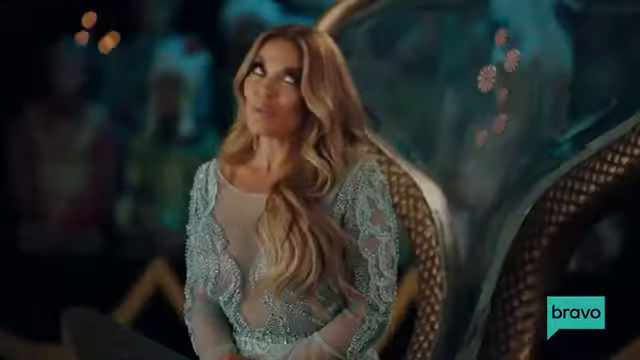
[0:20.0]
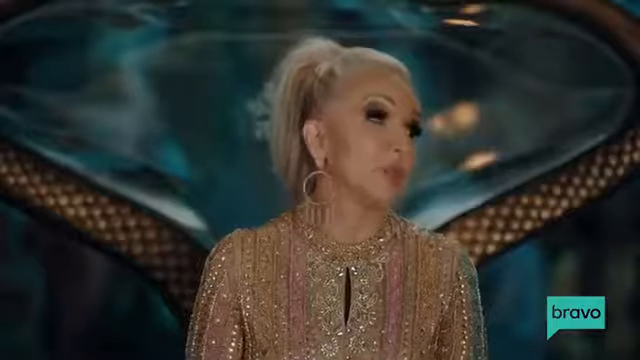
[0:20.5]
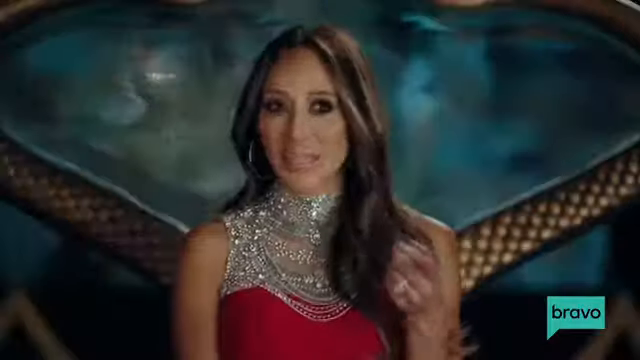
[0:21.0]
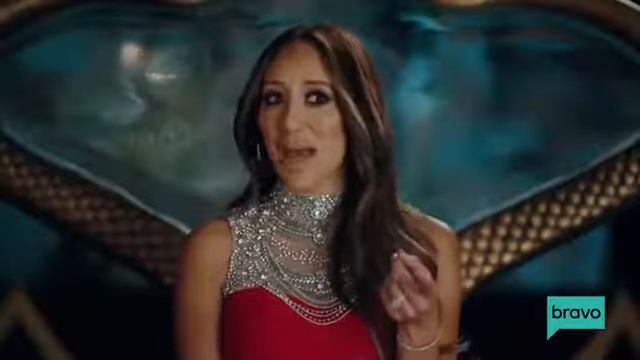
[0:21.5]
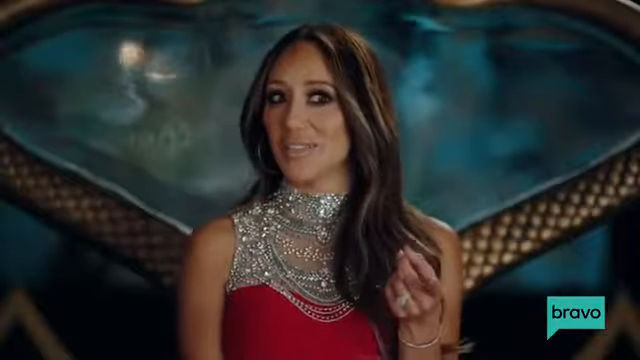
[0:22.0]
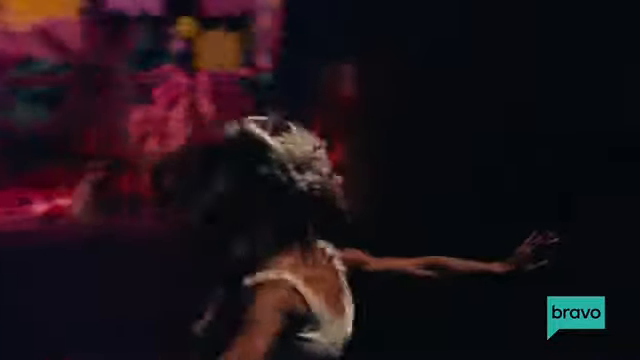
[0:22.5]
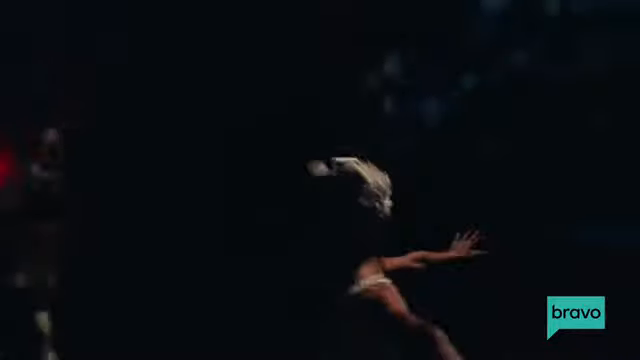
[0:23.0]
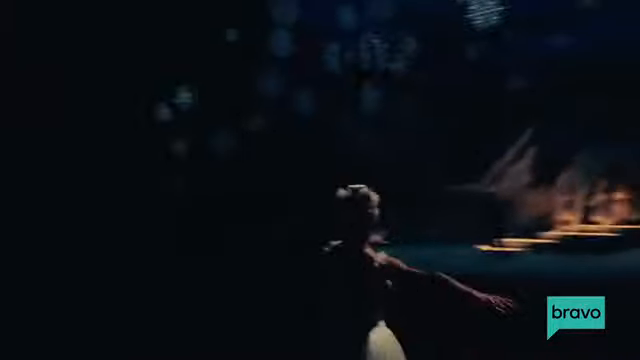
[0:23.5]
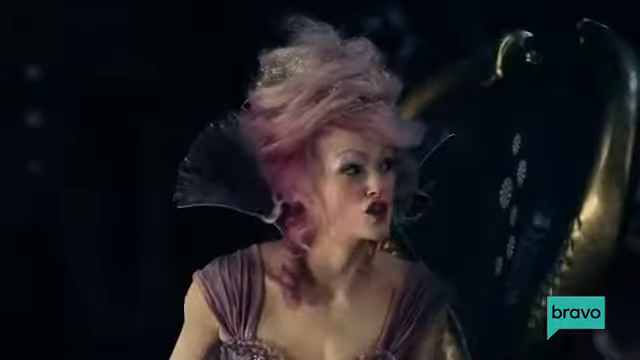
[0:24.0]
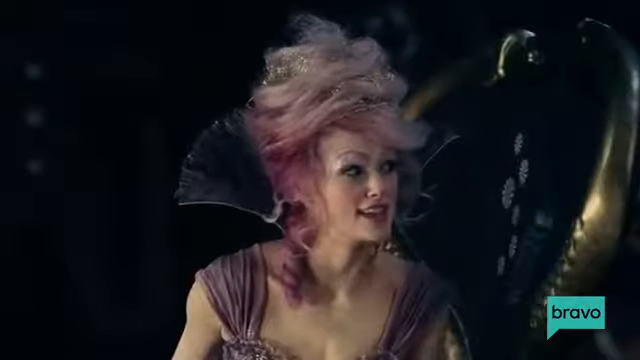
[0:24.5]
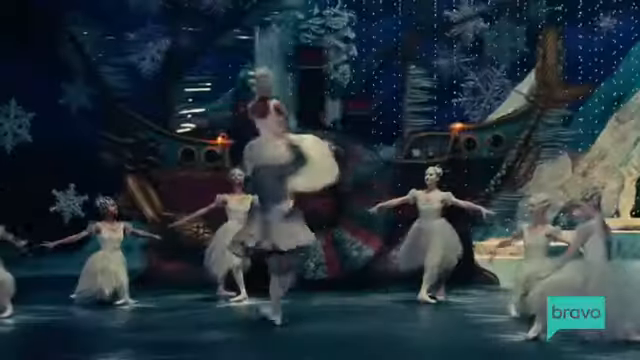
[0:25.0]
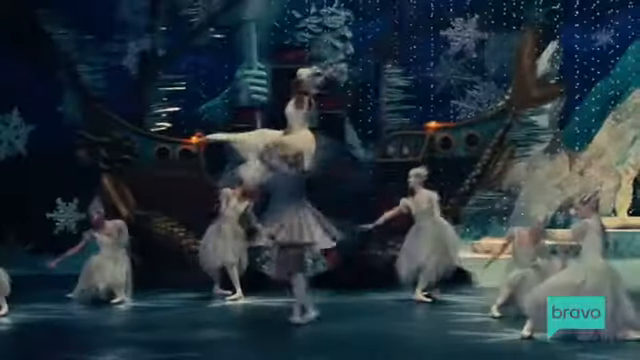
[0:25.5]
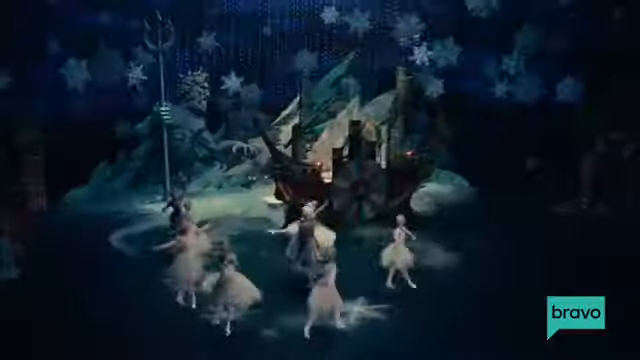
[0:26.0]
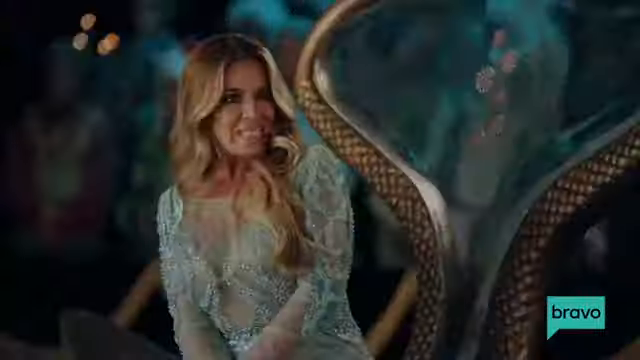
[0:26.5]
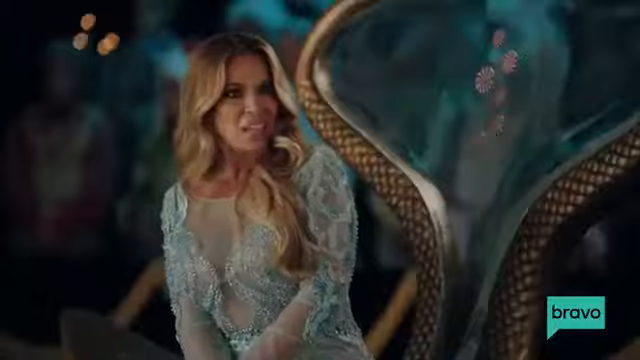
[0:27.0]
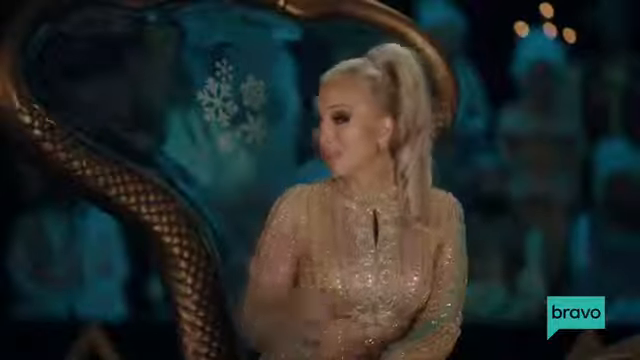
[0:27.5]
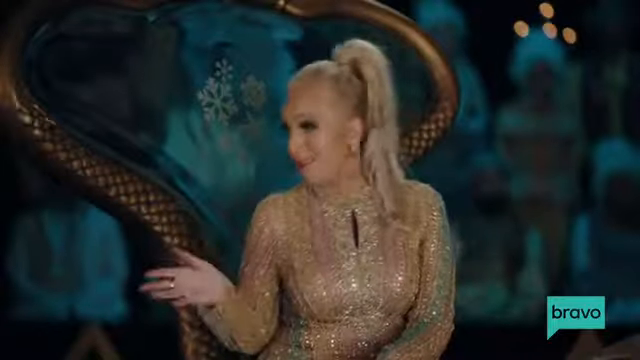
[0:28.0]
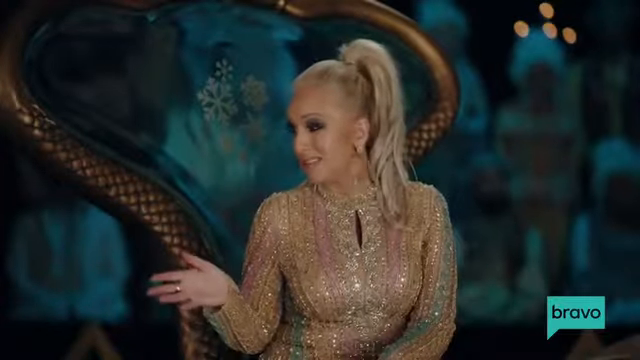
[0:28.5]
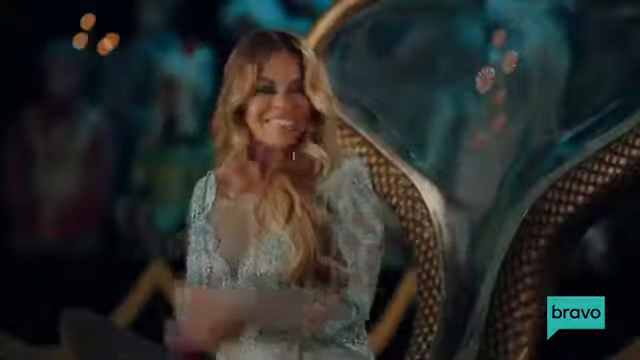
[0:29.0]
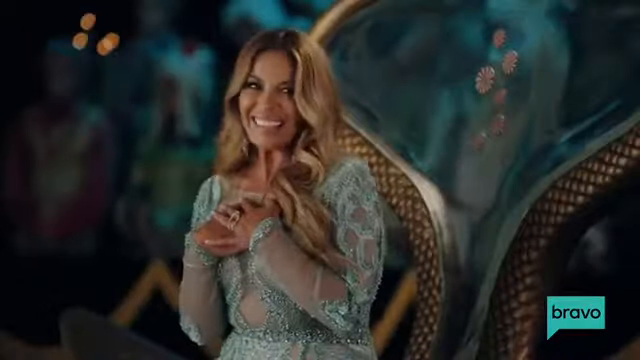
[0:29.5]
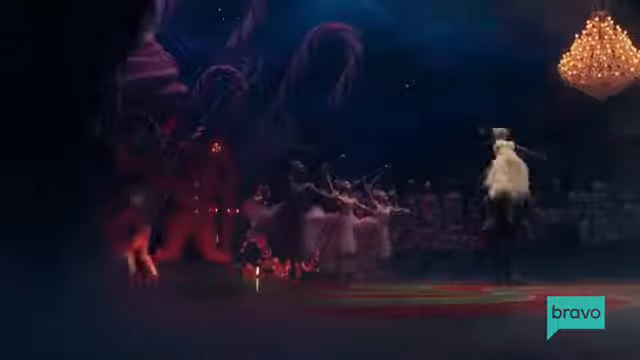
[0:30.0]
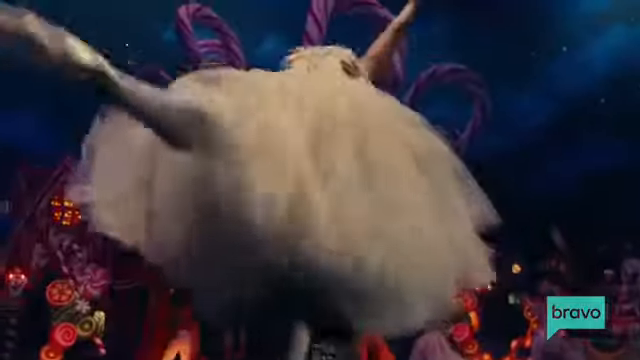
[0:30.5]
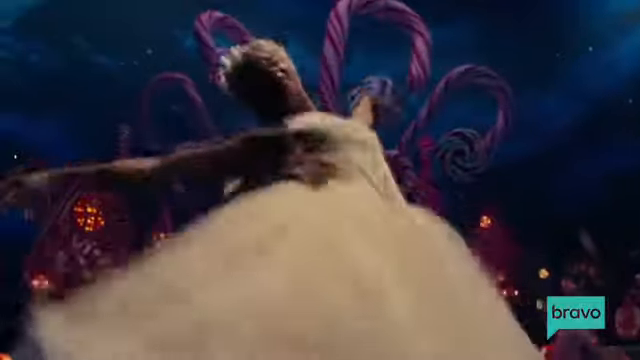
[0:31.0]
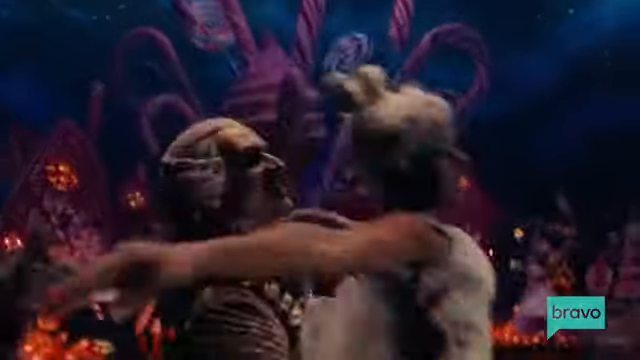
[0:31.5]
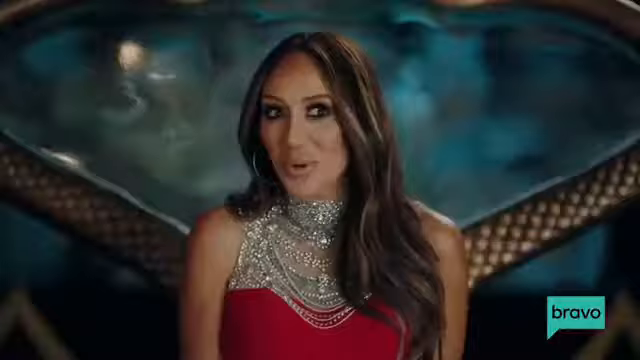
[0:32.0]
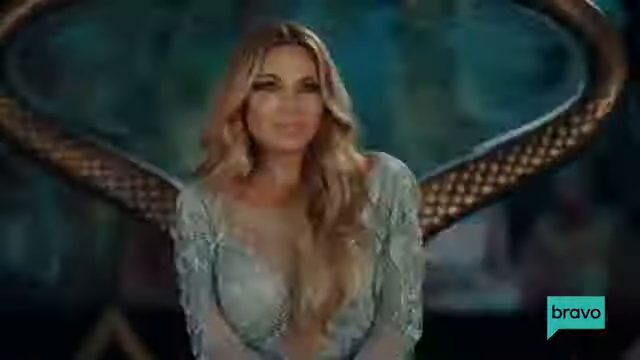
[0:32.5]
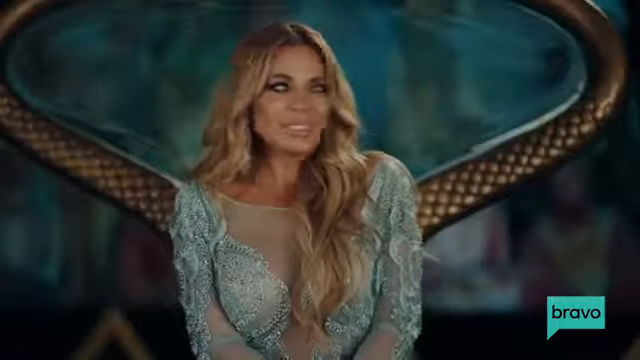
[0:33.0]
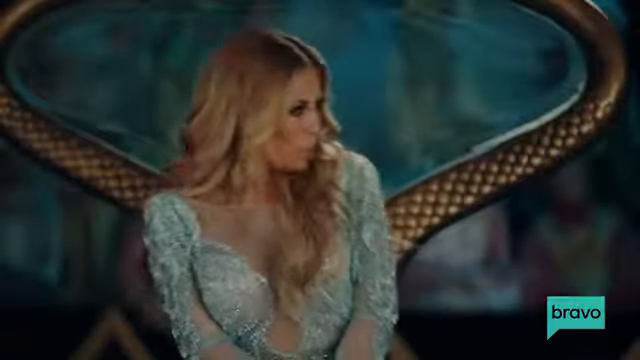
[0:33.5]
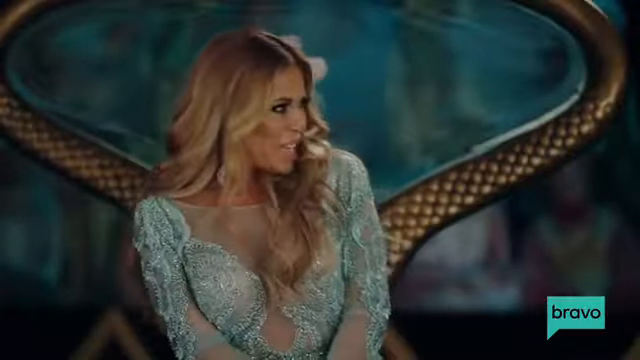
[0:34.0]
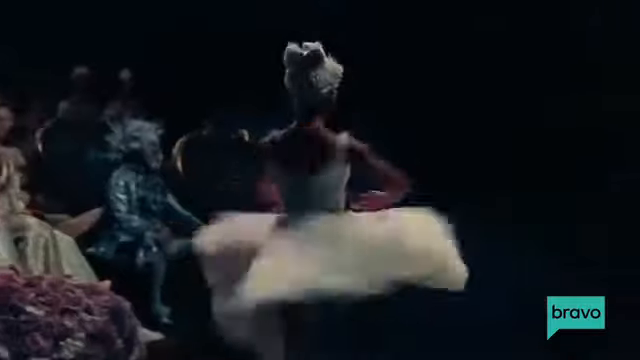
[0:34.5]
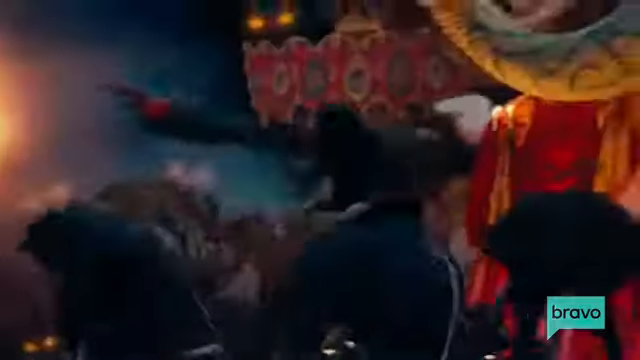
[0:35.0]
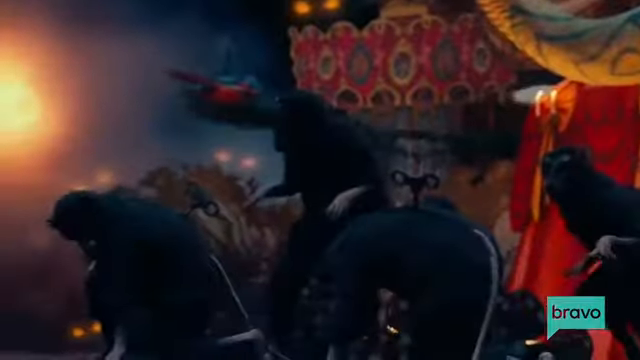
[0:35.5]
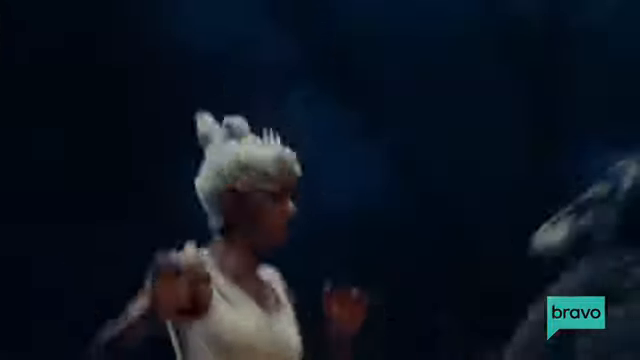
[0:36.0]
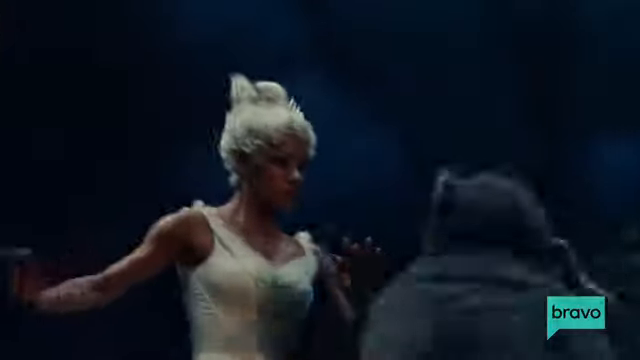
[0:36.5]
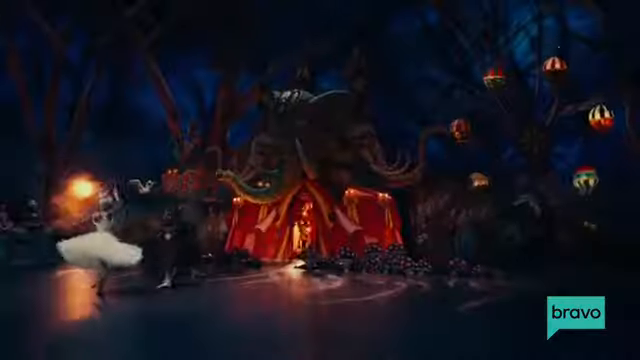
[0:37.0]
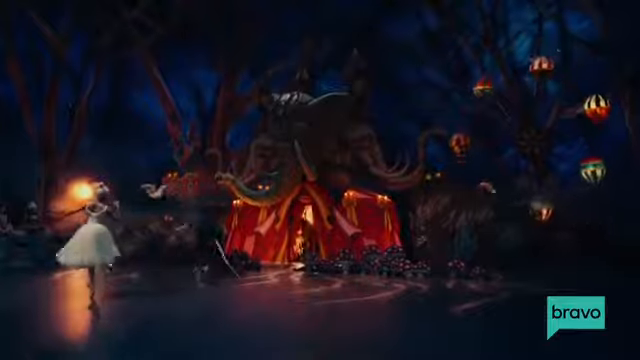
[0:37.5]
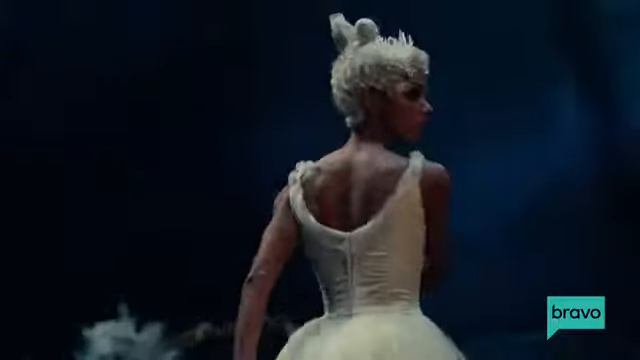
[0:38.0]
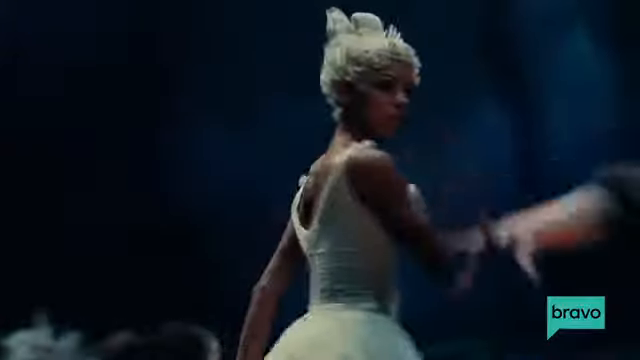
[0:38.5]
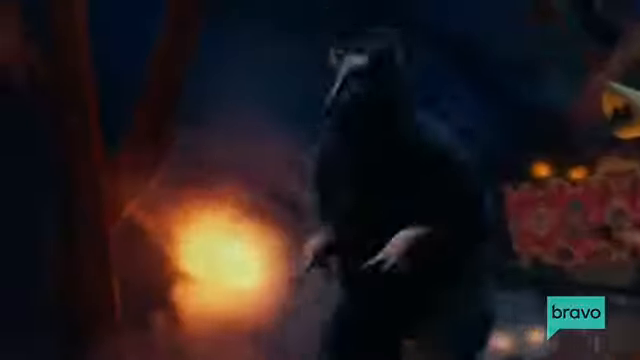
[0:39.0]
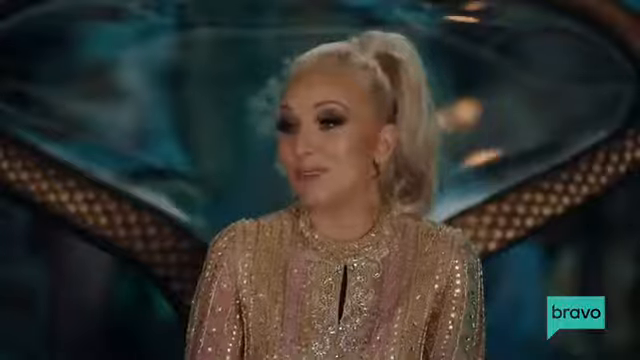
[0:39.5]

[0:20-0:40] One of the housewives rolls her eyes again. A quick shot shows the blonde woman speaking to someone, then the woman who took the selfie is still talking, kind of nodding her head and looking out of the corner of her eye. The video cuts to footage that looks like it is from the Nutcracker ballet or play, back to the mystical-looking woman, and then to more Nutcracker ballet footage. The housewives continue talking to each other and bantering; one seems to have just received a compliment, with her hands over her chest and a smile on her face. More Nutcracker ballet footage, apparently on stage, shows a woman being lifted and put down. Back with the housewives, they appear to be talking, maybe about the Nutcracker or the footage. More stage footage shows a woman on stage who looks cautious around dark mouse-like characters, and the video cuts back to the housewives bantering.